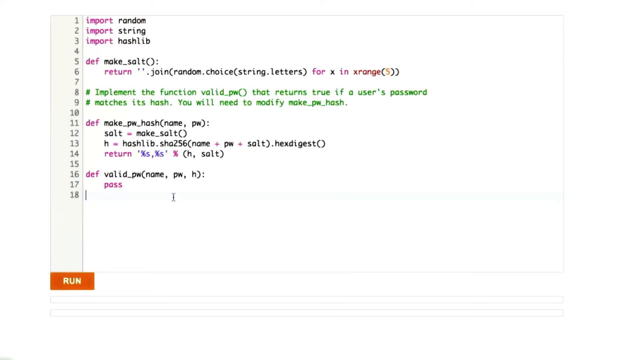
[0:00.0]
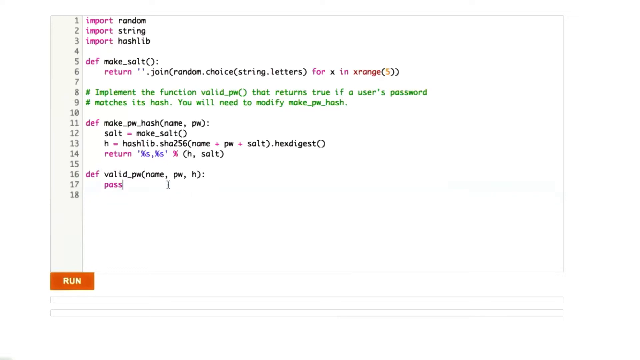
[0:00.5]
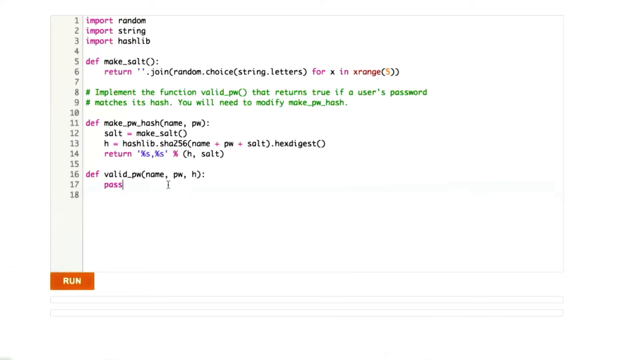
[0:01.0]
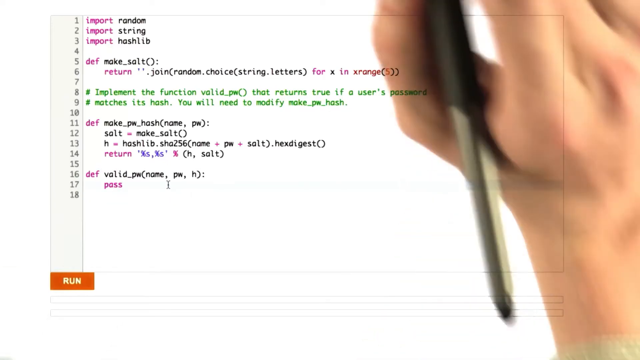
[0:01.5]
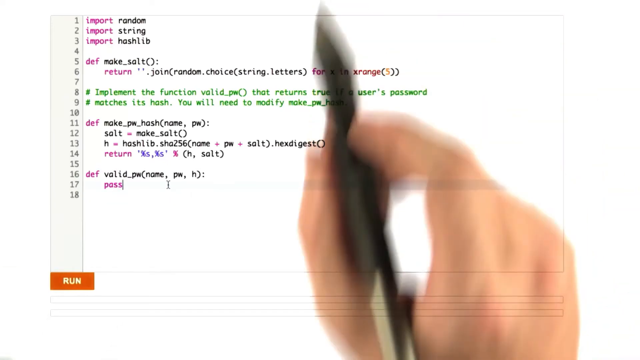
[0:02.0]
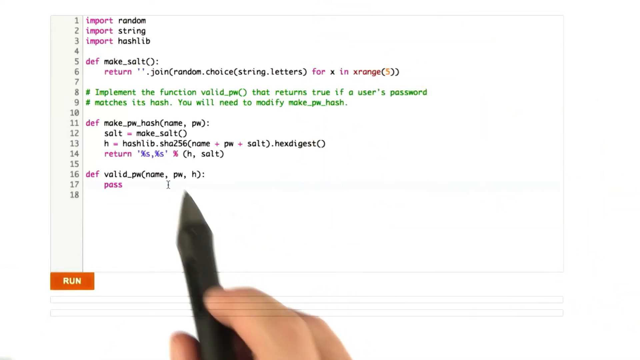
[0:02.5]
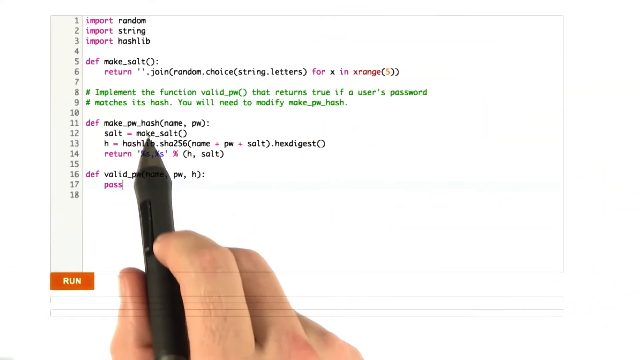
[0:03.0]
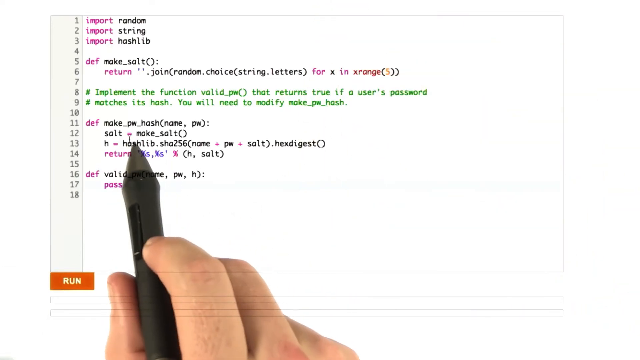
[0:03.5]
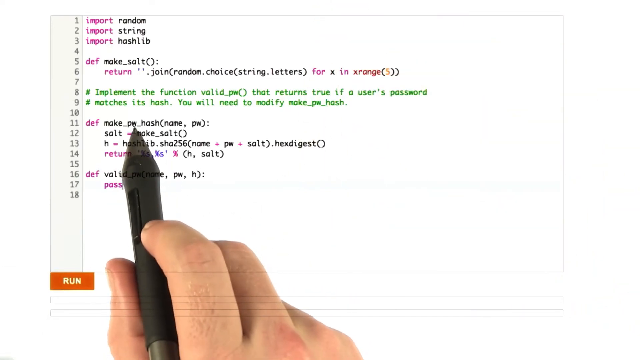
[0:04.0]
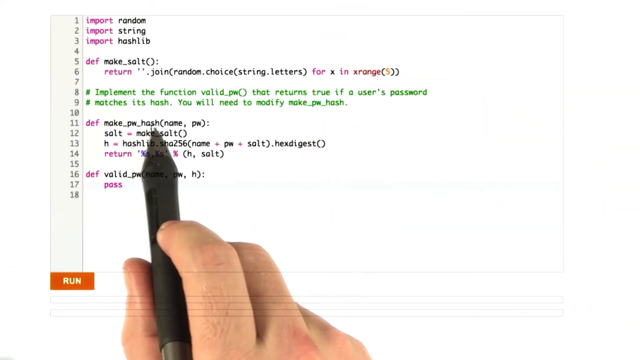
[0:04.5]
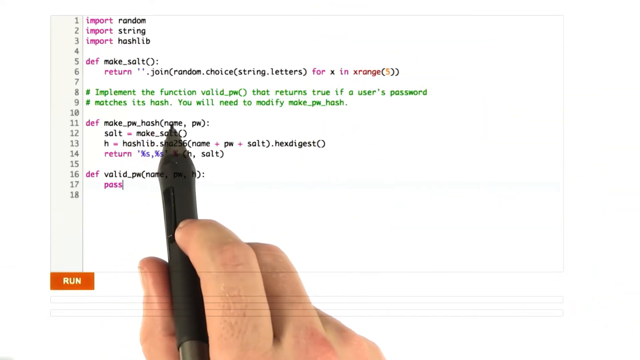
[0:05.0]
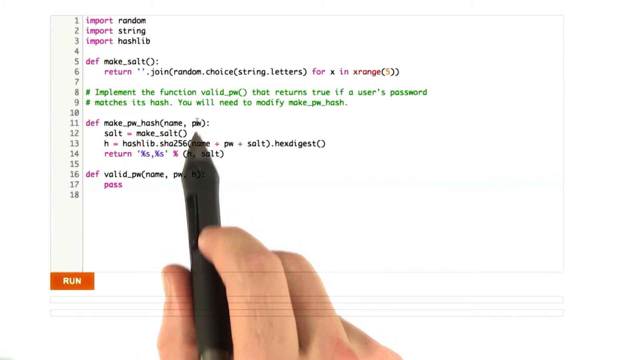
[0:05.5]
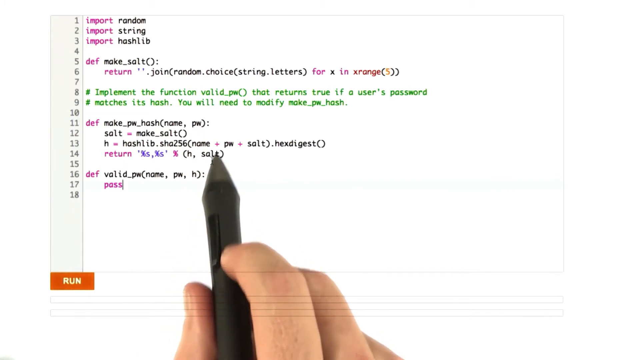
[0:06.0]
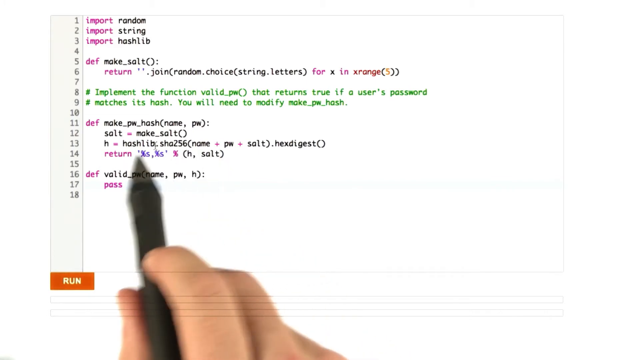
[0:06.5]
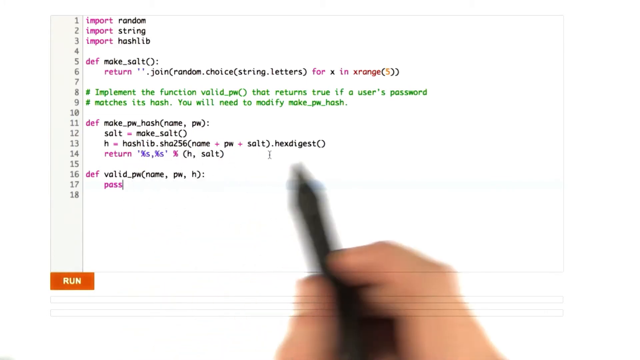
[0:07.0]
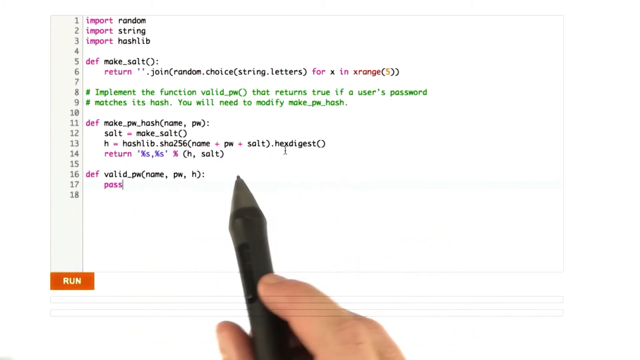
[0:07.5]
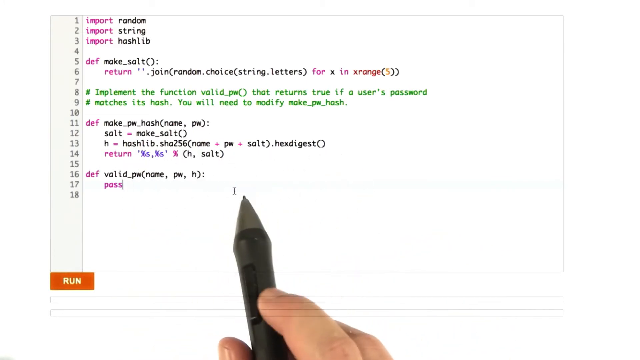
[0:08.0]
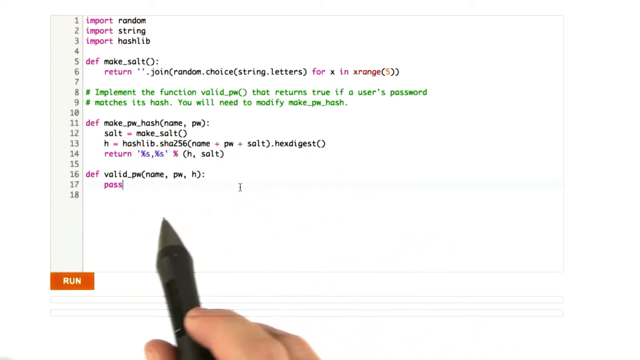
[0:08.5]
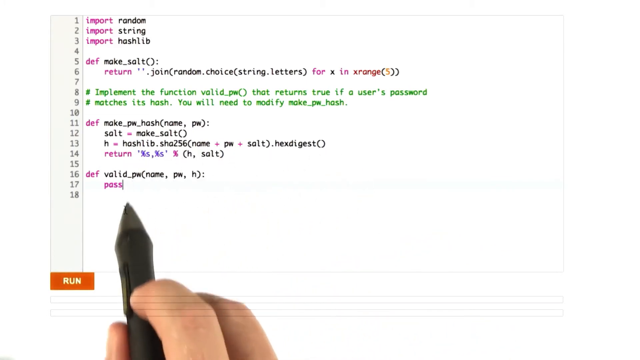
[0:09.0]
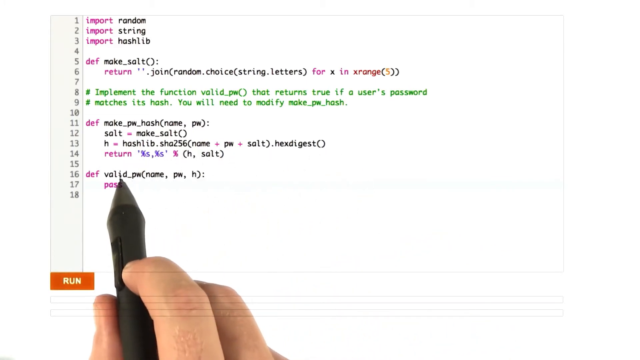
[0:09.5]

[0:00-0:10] Code that needs to be run is shown, including what has to be typed in order to run it. The code looks rather complicated.